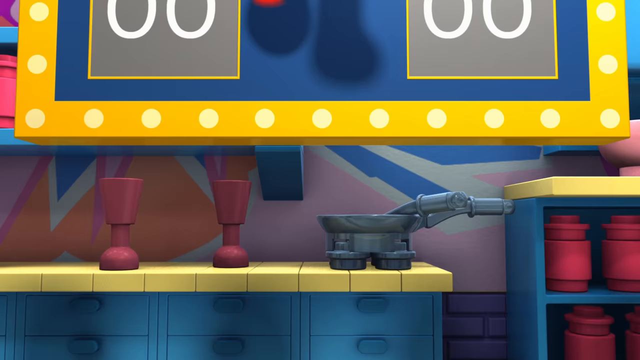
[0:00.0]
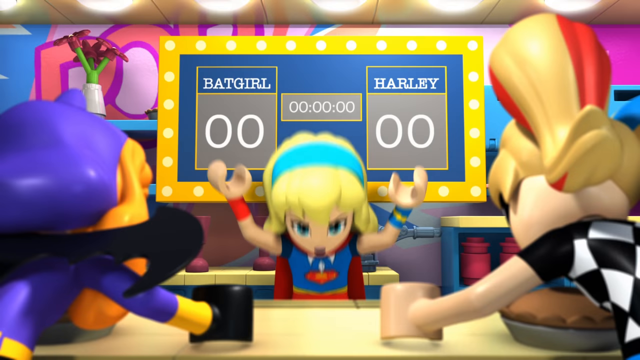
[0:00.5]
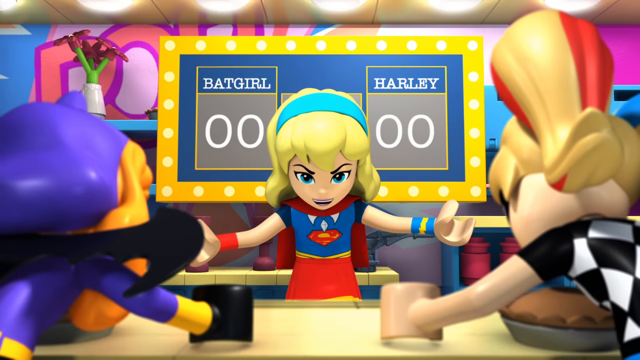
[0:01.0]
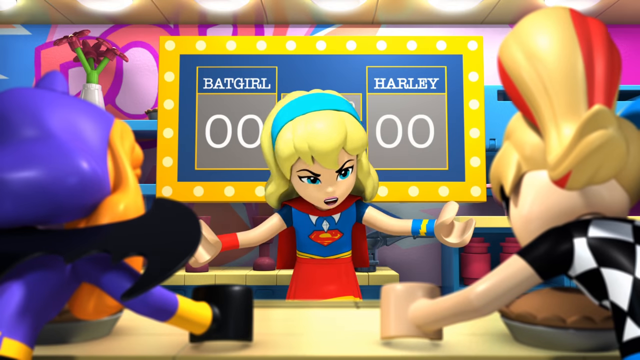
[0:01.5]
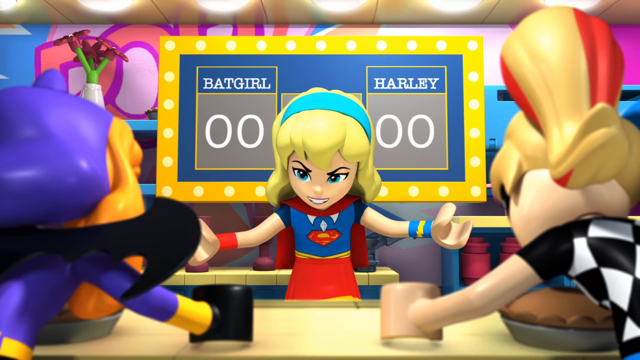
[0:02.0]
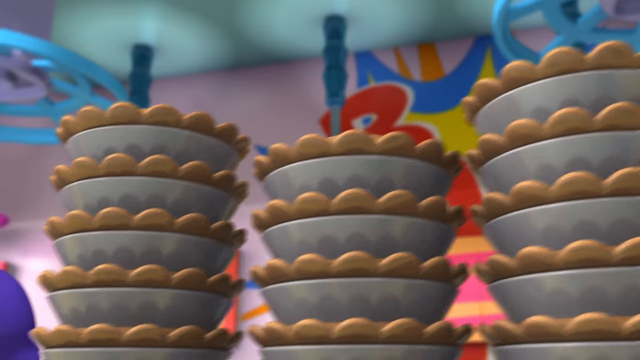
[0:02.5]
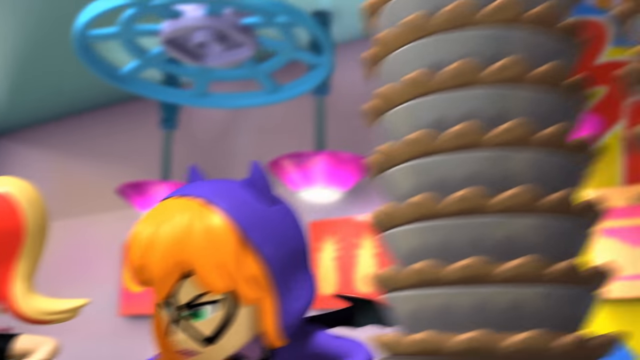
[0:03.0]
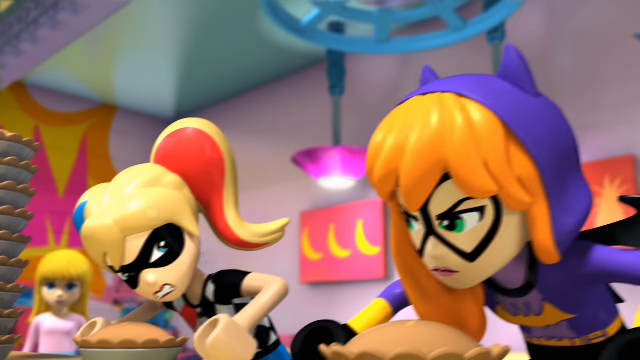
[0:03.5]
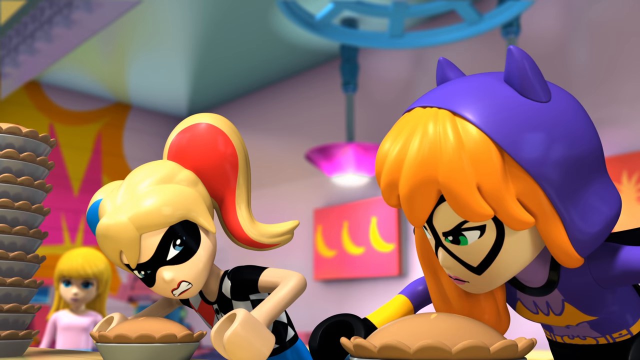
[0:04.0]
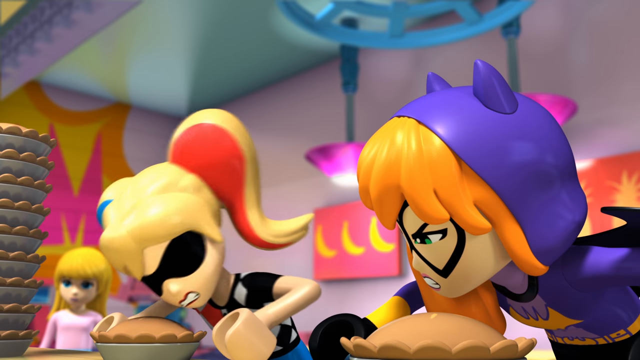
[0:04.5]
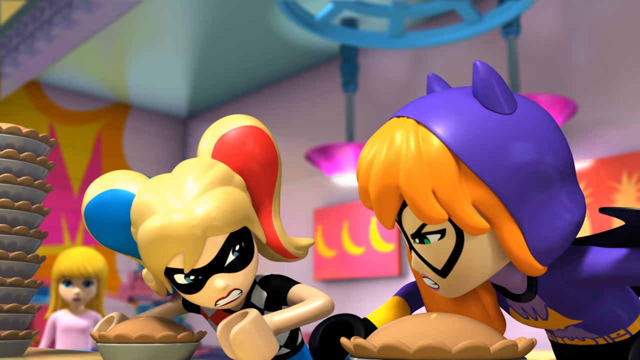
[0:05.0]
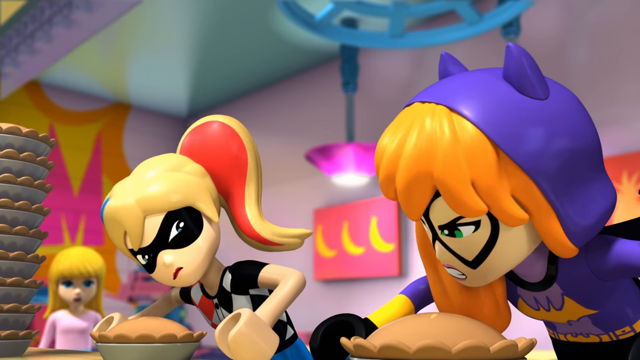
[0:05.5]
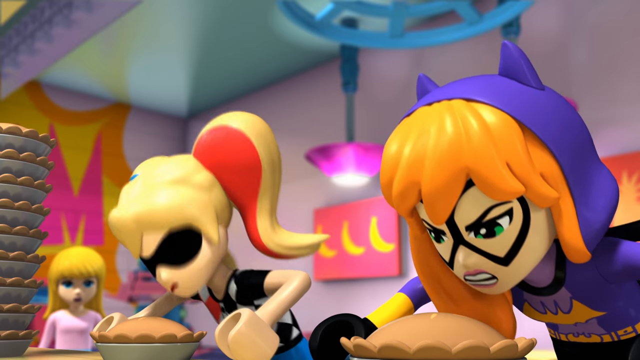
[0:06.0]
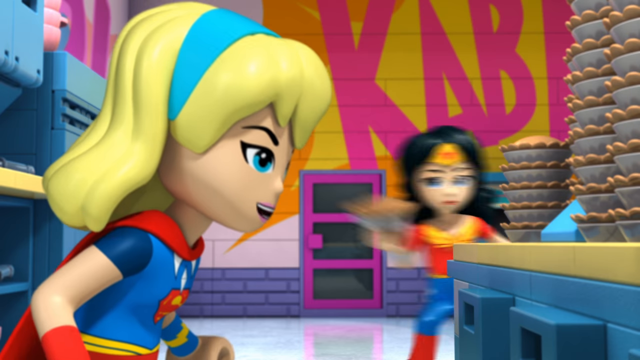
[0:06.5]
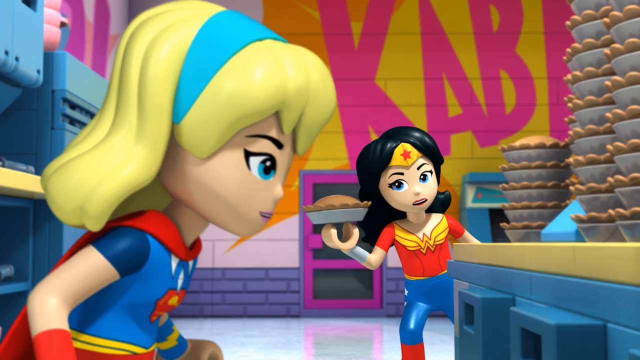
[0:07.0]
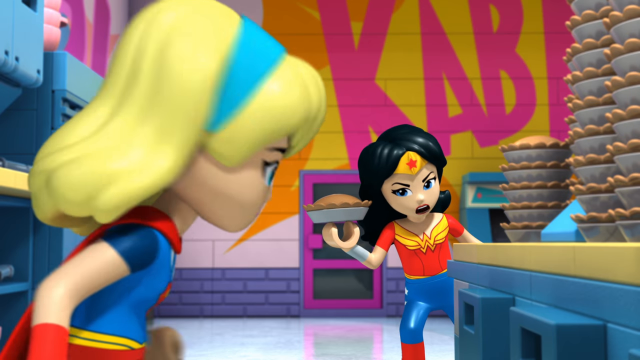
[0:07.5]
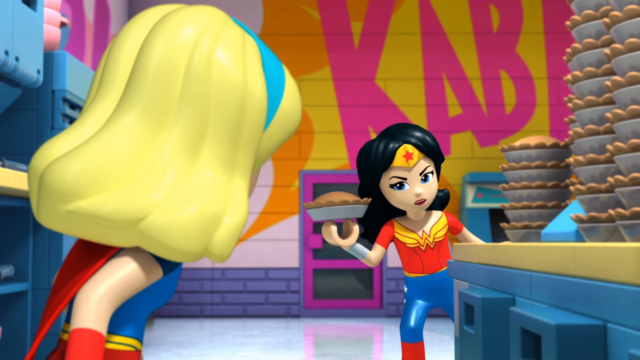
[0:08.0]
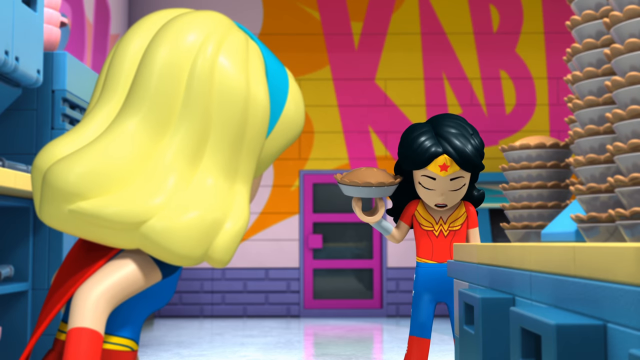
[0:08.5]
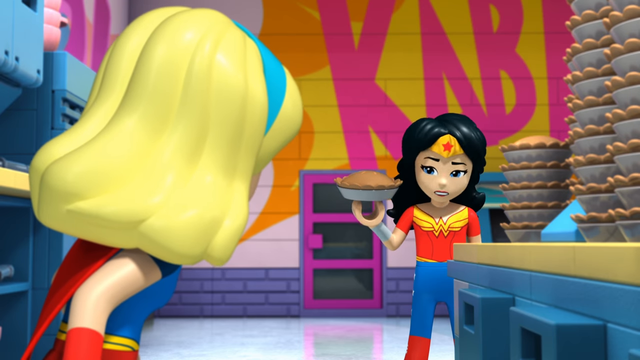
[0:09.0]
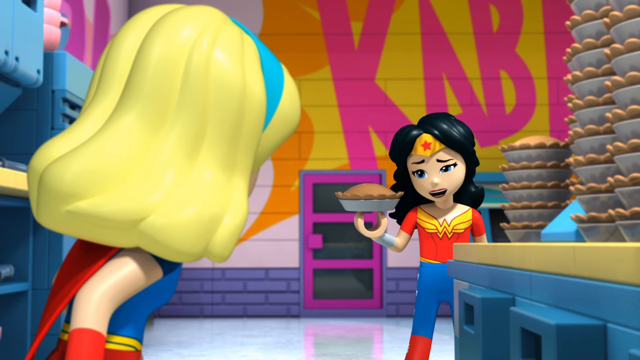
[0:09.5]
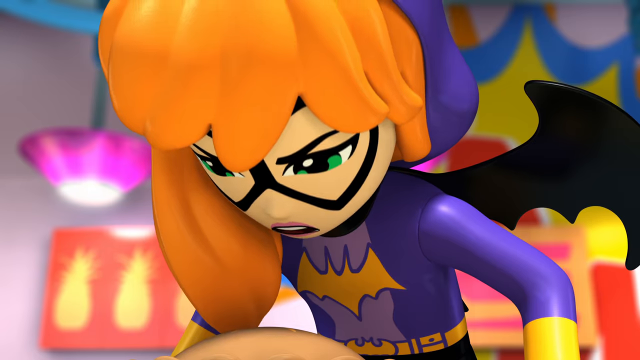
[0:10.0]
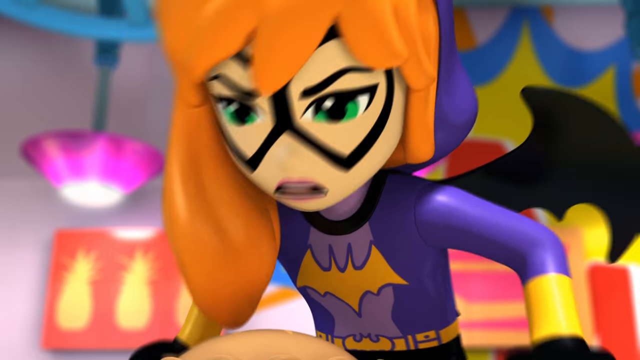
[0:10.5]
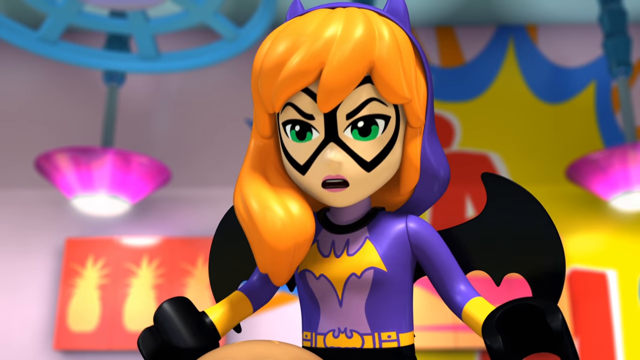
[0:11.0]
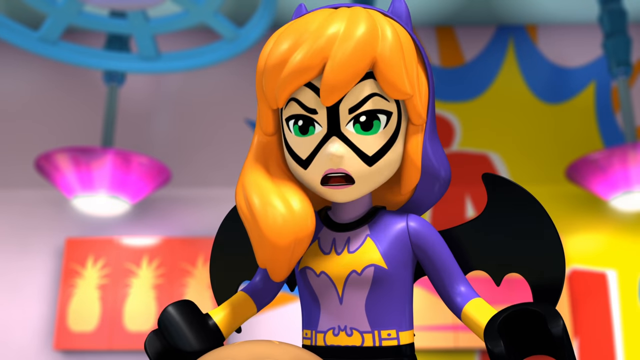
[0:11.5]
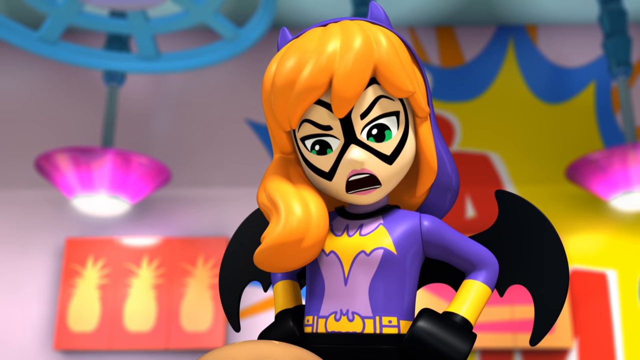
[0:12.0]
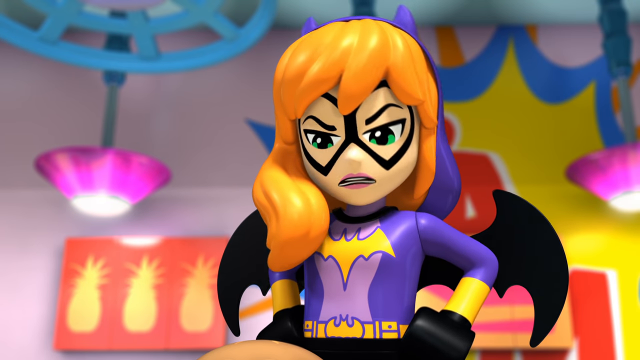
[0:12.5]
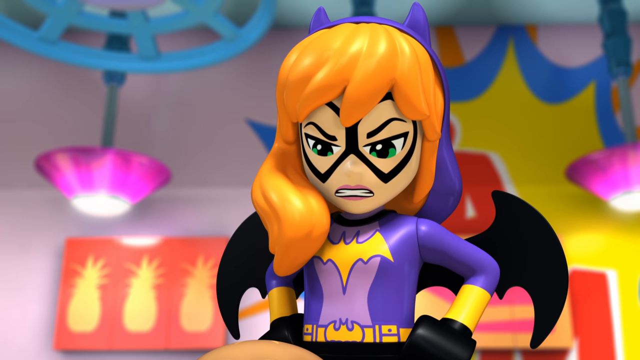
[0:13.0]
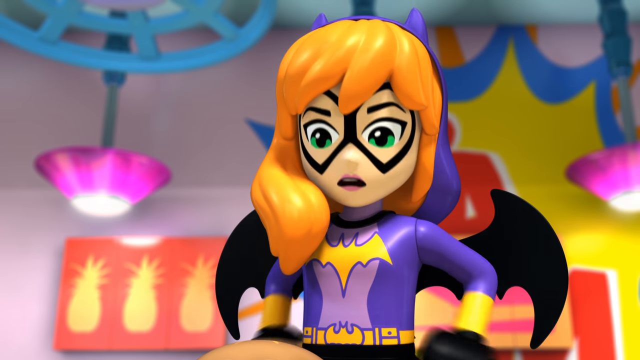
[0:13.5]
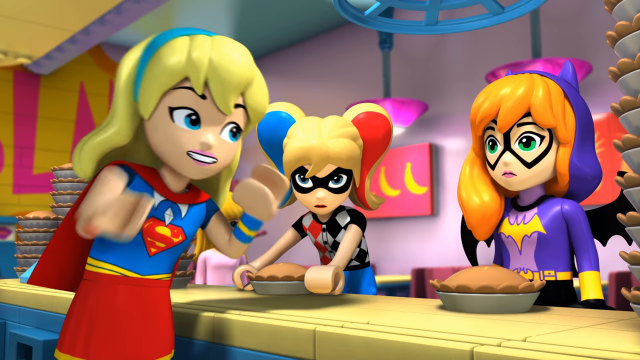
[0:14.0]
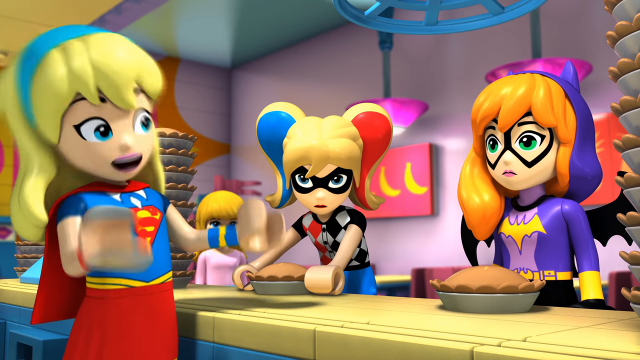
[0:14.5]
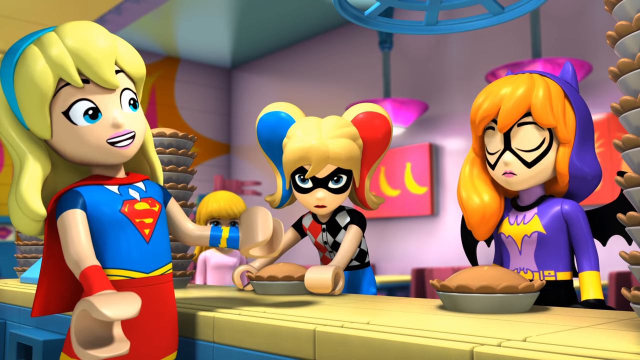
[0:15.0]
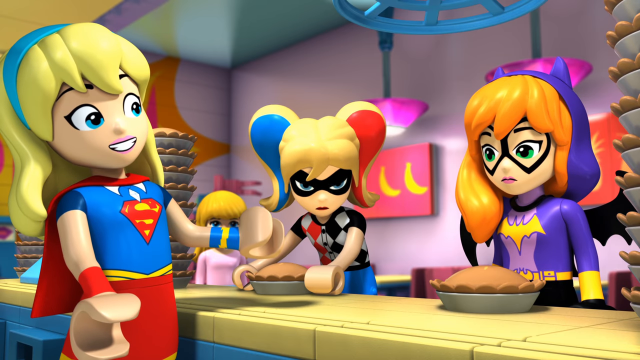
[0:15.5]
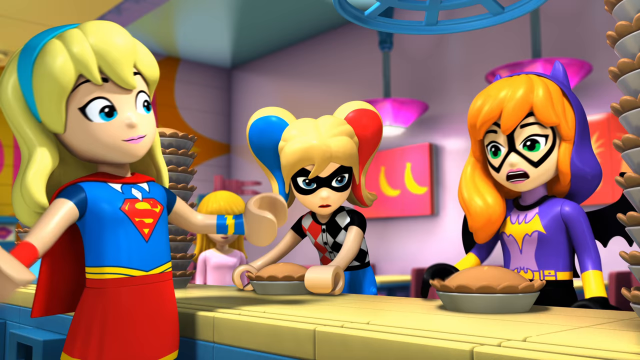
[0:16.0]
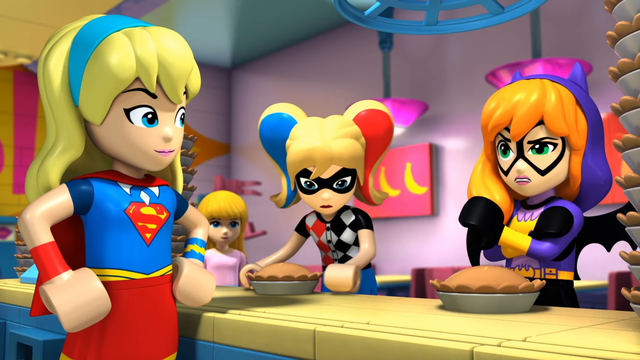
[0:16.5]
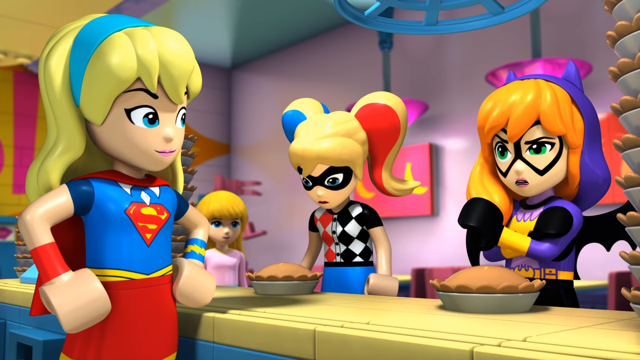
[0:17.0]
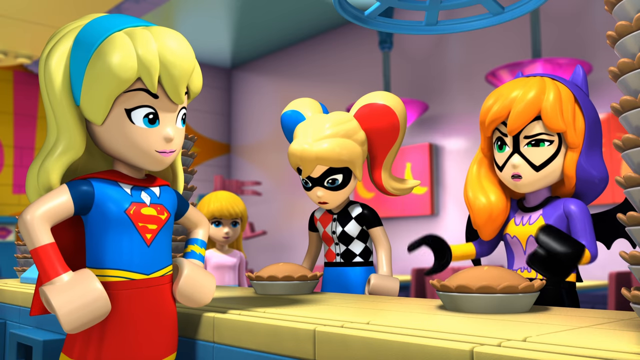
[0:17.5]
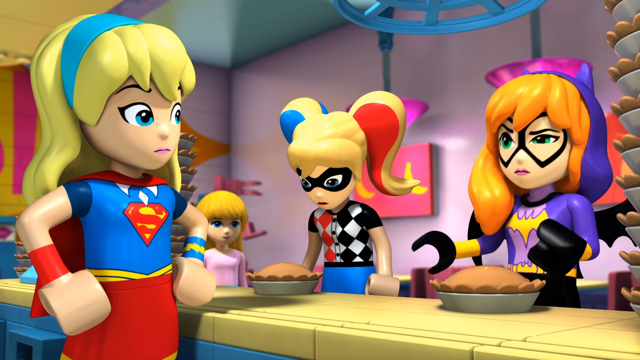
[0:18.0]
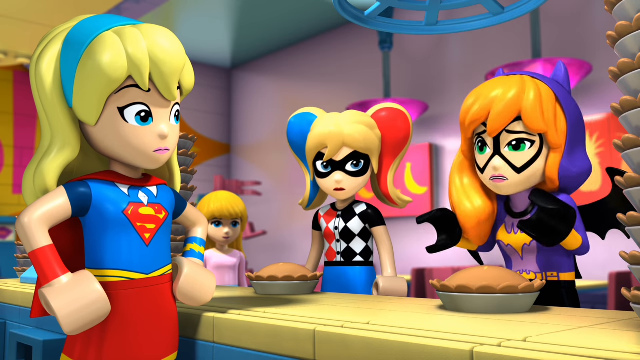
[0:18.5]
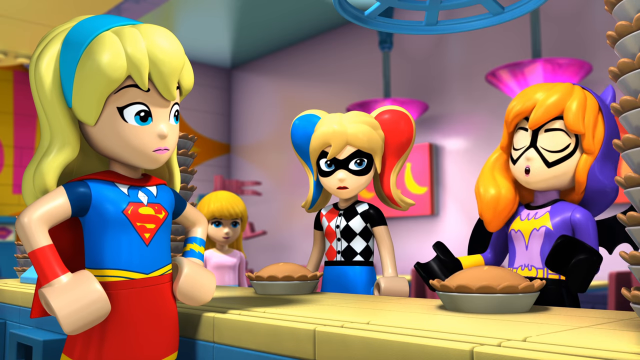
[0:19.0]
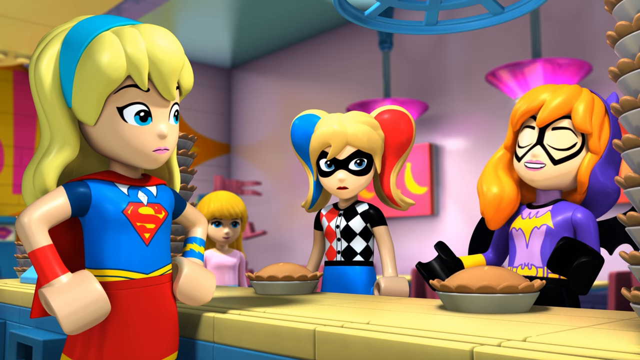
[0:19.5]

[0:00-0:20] In what looks like a cartoon, Supergirl is talking and flies down to a table. Supergirl wears a light blue headband. Wonder Woman is also there, holding a pie in her right hand. The characters appear to be at a table with pies, maybe in some kind of kitchen. There is a pie in front of Batgirl and a pie in front of Harley Quinn, and piles and piles of pies cover the table they are surrounded by. Scoreboards are behind Supergirl; one reads "Batgirl 00" and the other also shows 00.